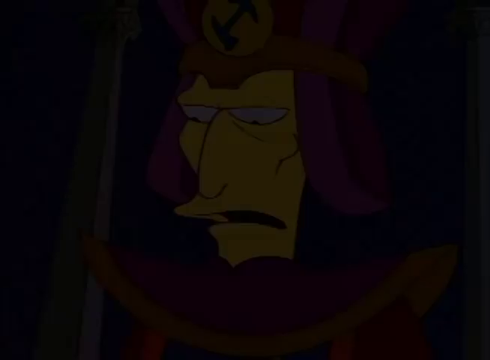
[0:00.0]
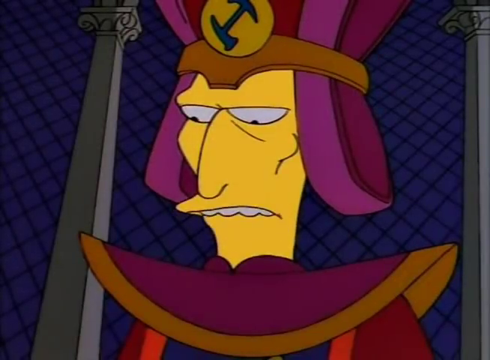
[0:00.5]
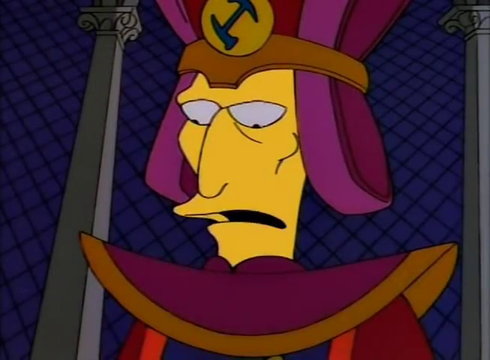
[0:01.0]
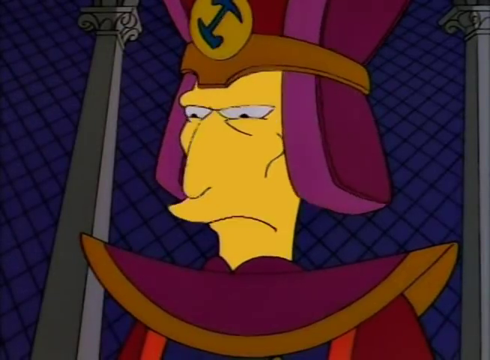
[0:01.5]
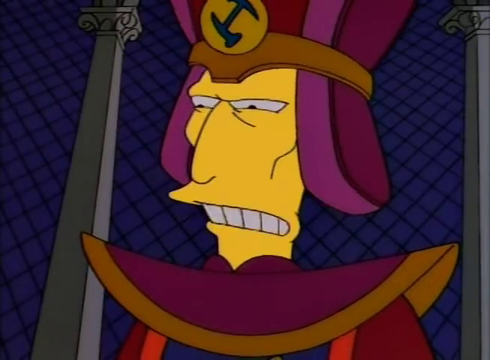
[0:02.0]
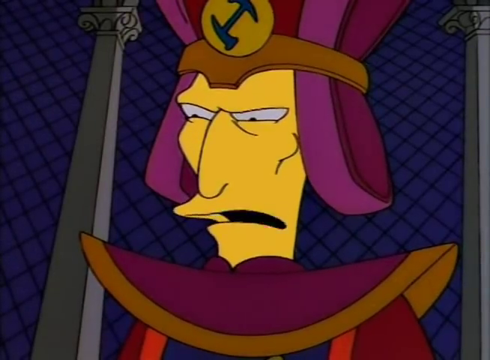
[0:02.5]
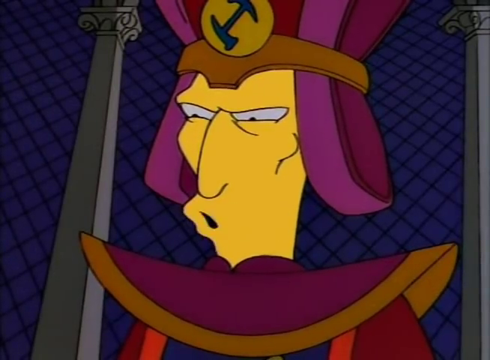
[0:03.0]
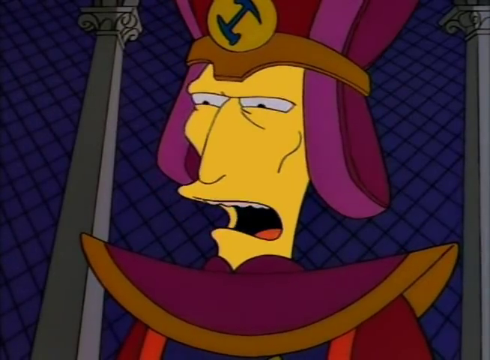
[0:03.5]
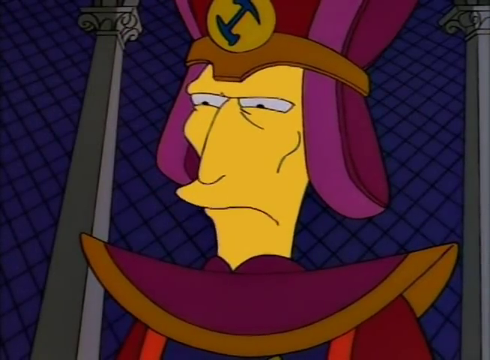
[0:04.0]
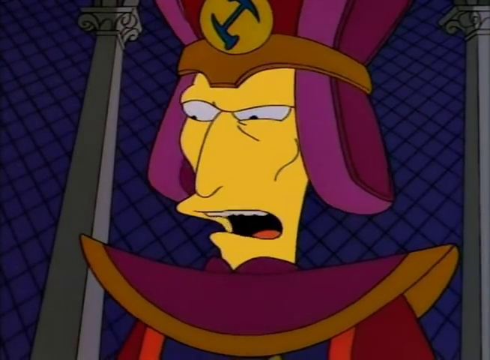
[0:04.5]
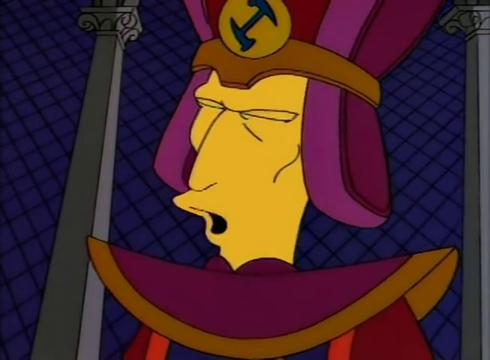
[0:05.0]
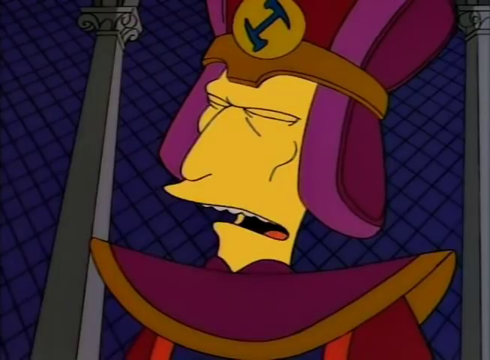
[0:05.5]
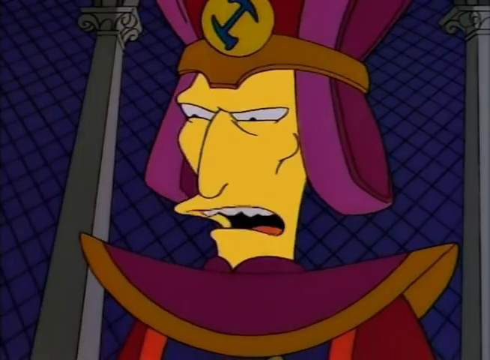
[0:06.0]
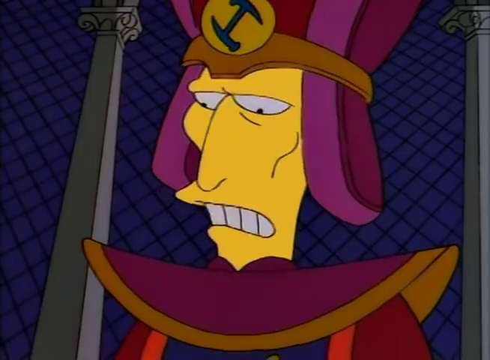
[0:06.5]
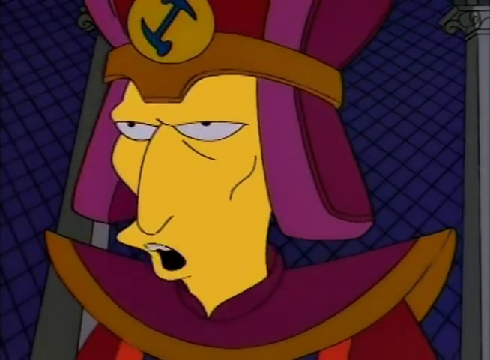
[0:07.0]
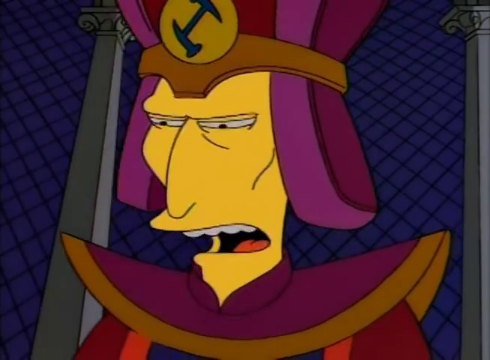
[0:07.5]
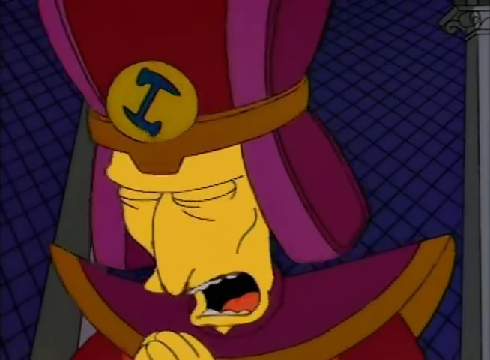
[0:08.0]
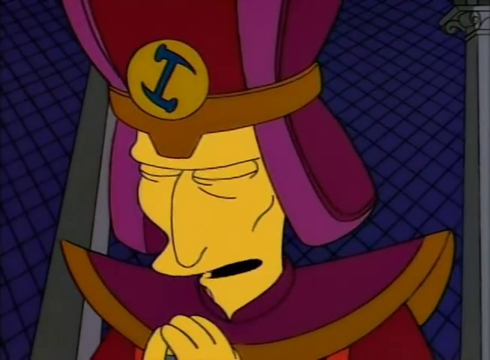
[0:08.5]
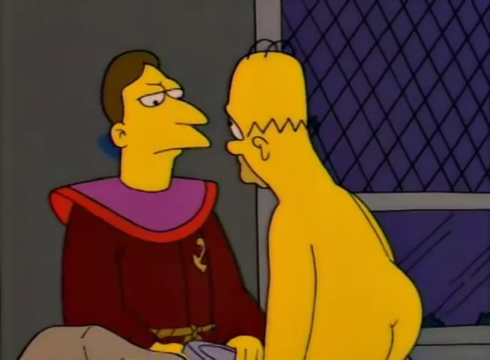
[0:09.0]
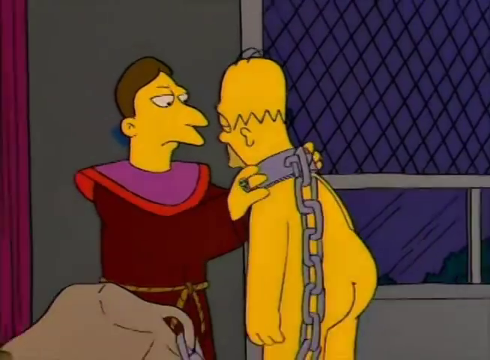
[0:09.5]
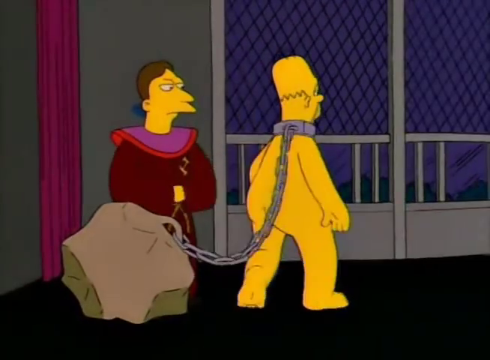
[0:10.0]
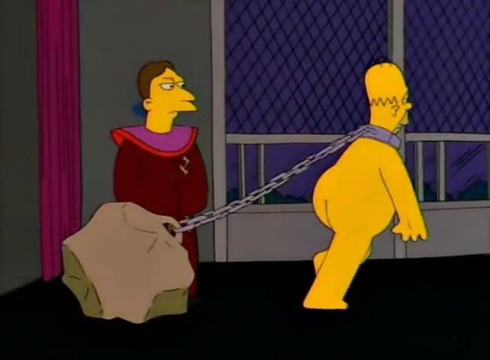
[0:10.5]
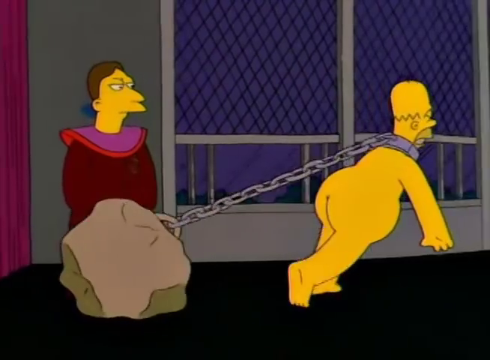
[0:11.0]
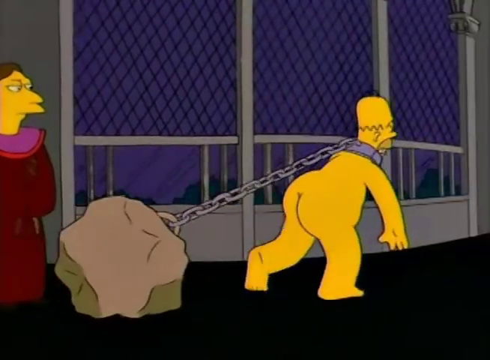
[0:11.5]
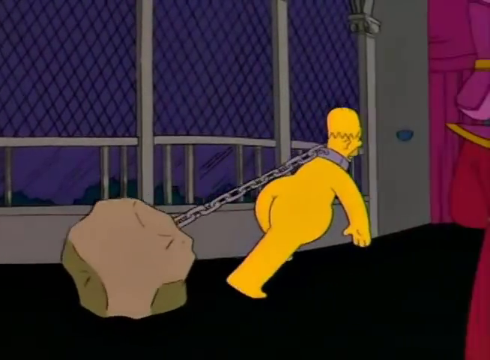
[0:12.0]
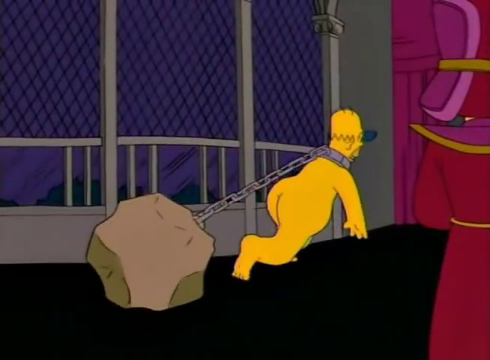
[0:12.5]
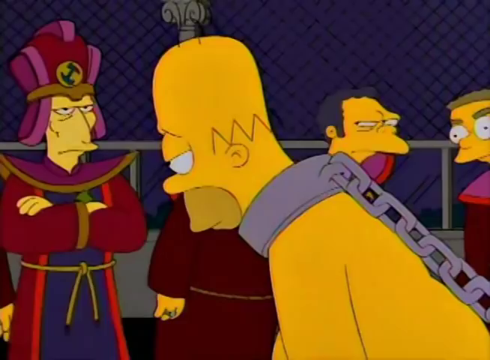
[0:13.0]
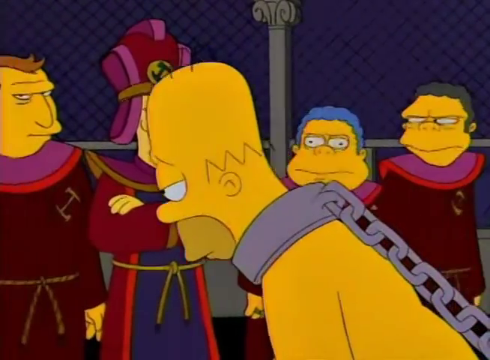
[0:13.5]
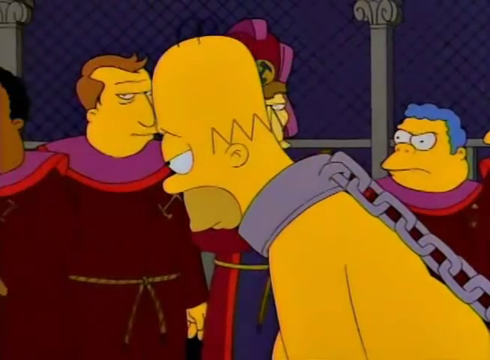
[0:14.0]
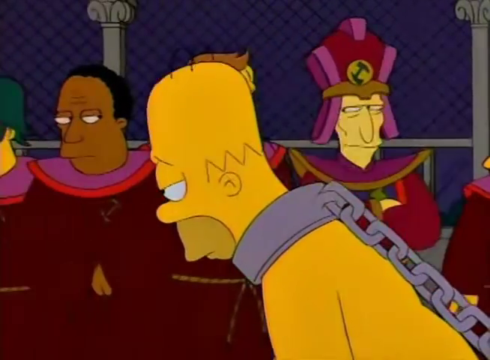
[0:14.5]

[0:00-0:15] In this scene from an episode of The Simpsons, Homer appears to be at the top of some kind of tower or castle, and it looks like it is dark, at nighttime. It opens with a man talking, dressed in a robe colored red, pink, and purple. The camera then pans over to Homer, who is completely naked, showing only his bare yellow skin. A man next to Homer, who has brown hair and wears a purple, pink, and dark maroon robe, attaches a collar with a chain around Homer's neck. A large boulder is attached to the chain. Once the collar is on, Homer turns around and starts walking away, visibly struggling to pull the boulder. As he walks by, other men dressed in similarly colored robes are standing in a line, watching Homer as he struggles to pull the boulder along by his neck. Homer has a very sullen look on his face and stares at the ground.